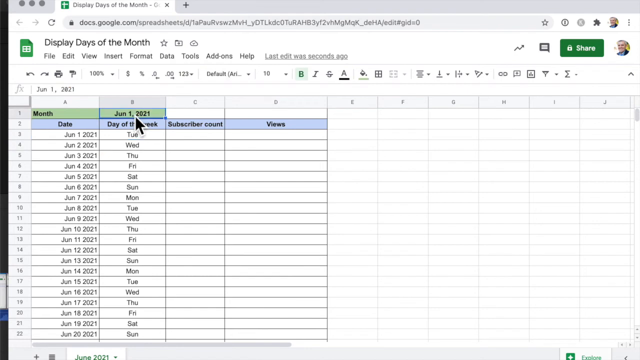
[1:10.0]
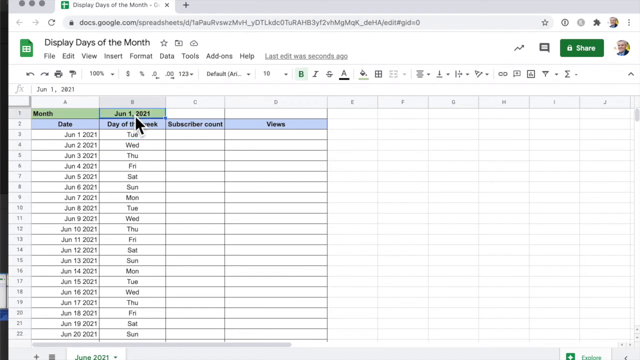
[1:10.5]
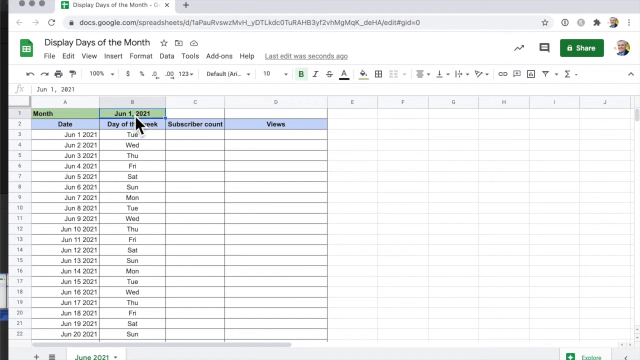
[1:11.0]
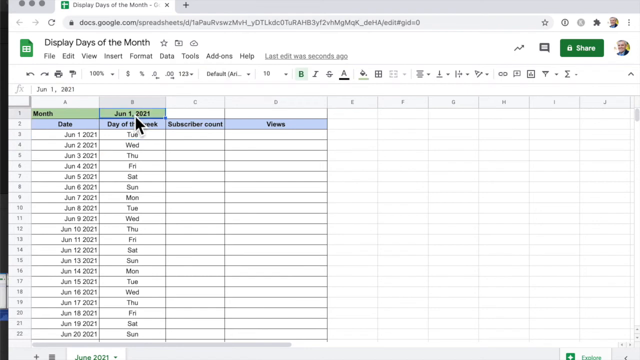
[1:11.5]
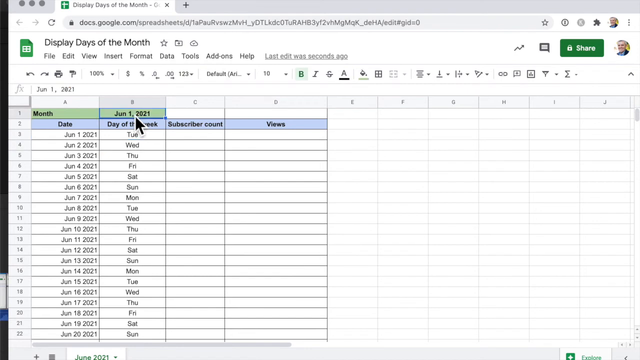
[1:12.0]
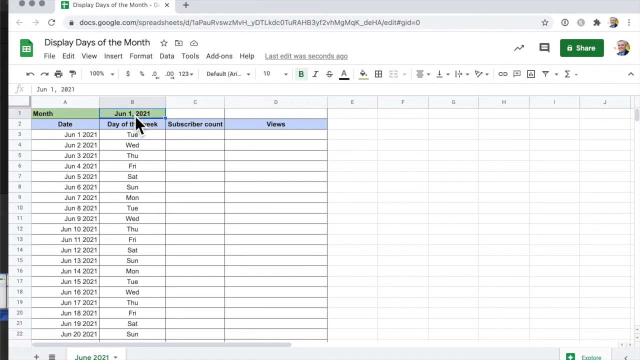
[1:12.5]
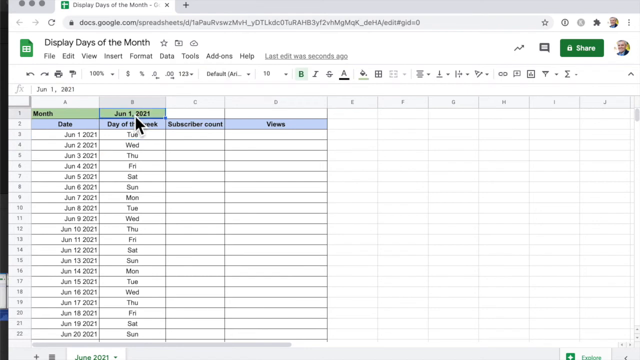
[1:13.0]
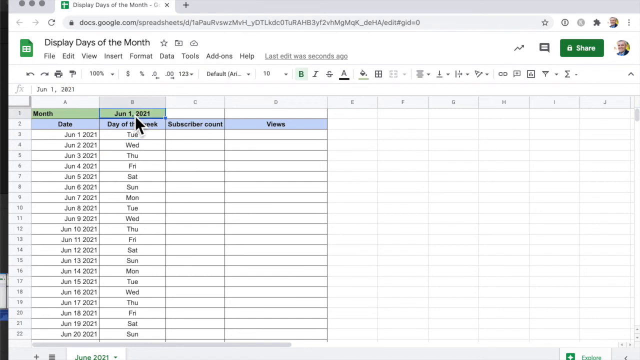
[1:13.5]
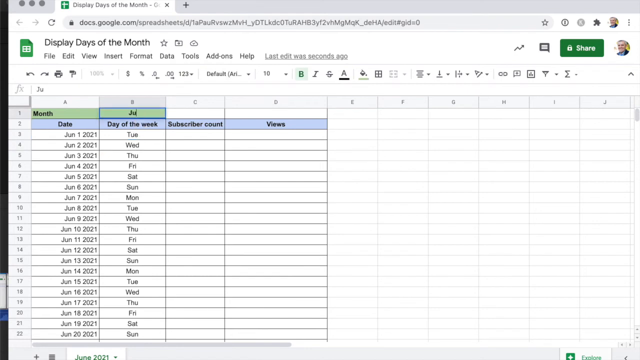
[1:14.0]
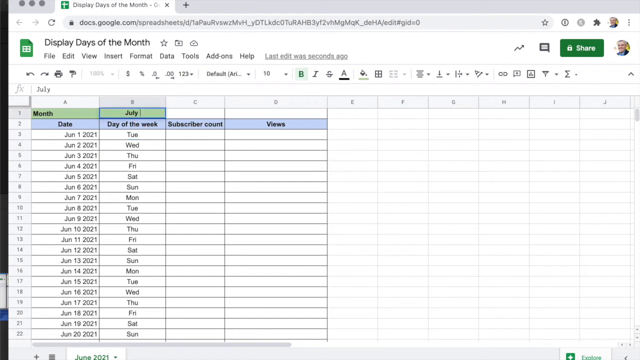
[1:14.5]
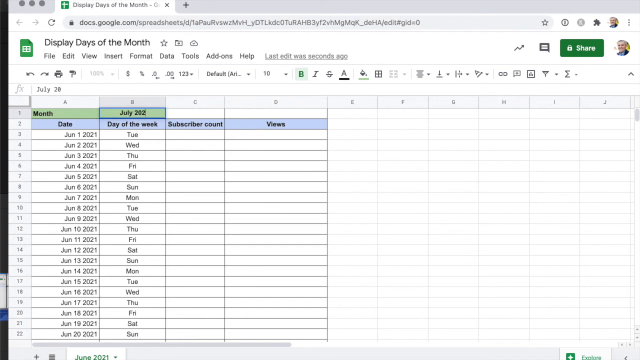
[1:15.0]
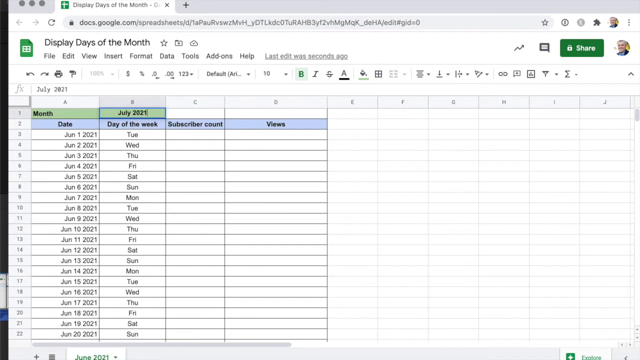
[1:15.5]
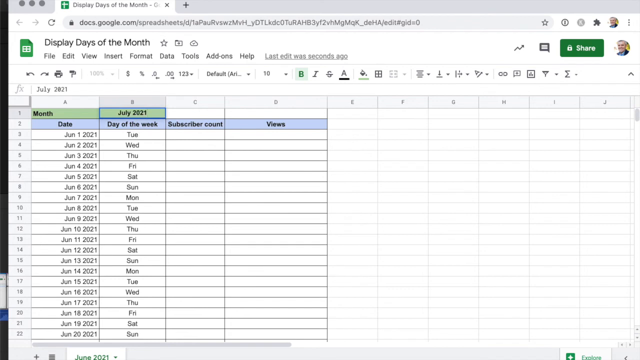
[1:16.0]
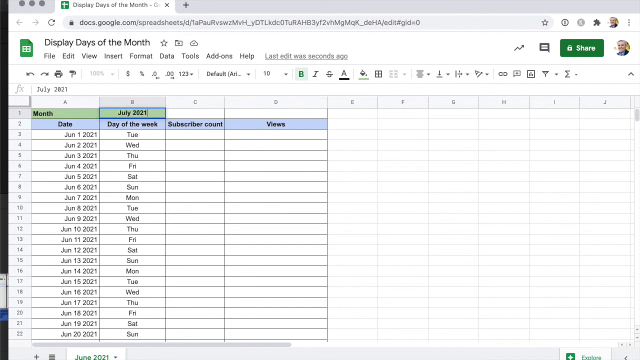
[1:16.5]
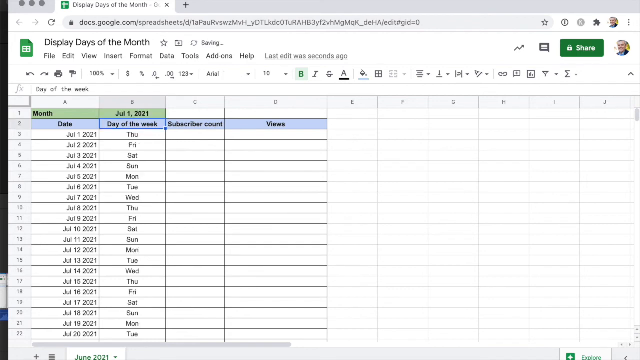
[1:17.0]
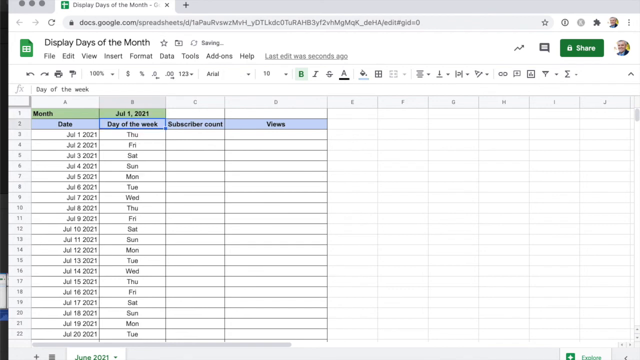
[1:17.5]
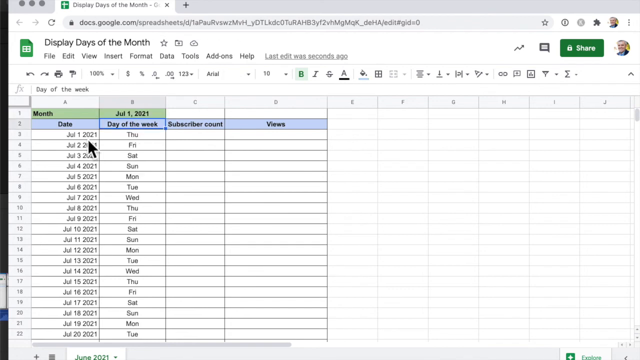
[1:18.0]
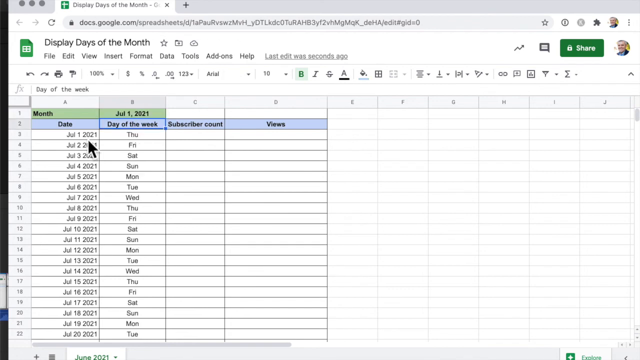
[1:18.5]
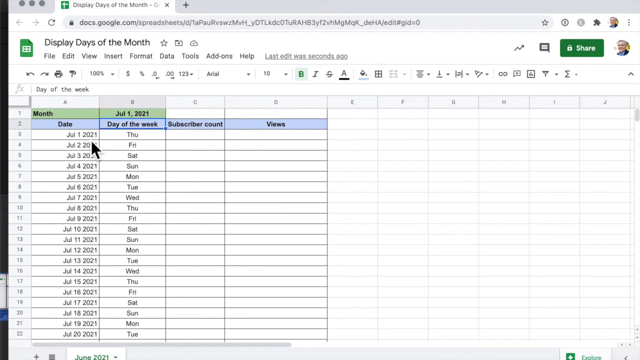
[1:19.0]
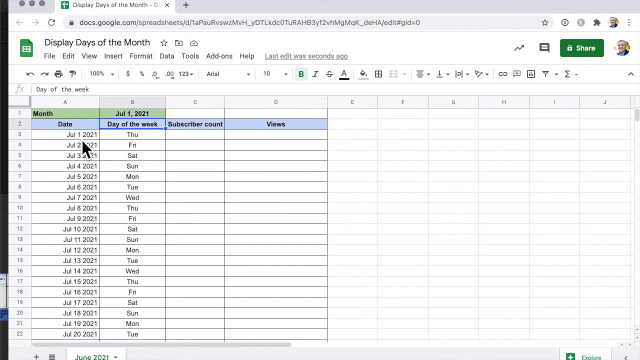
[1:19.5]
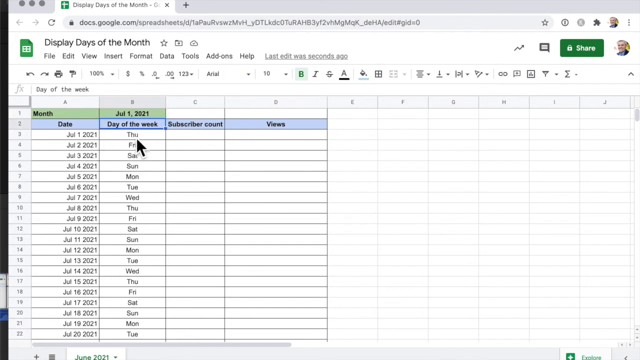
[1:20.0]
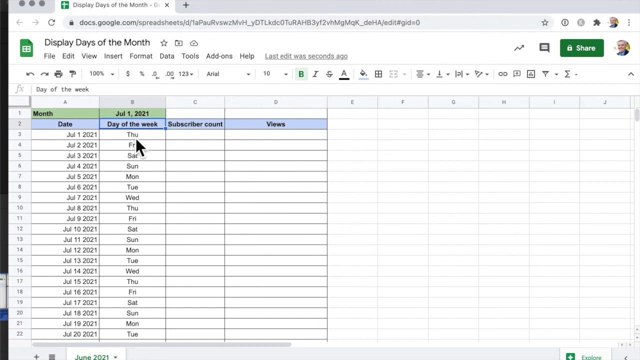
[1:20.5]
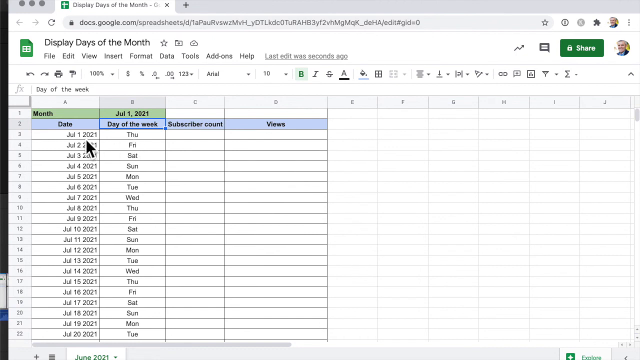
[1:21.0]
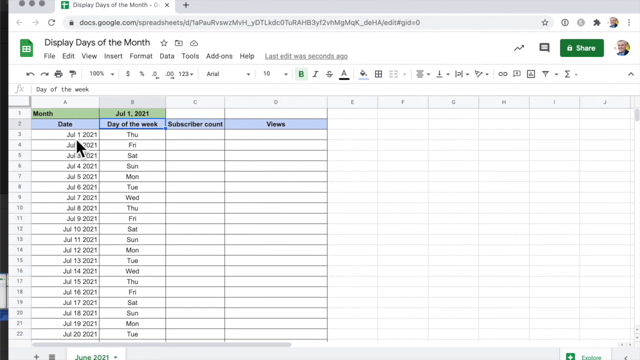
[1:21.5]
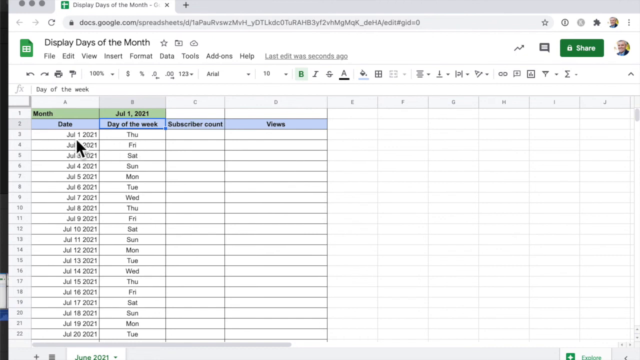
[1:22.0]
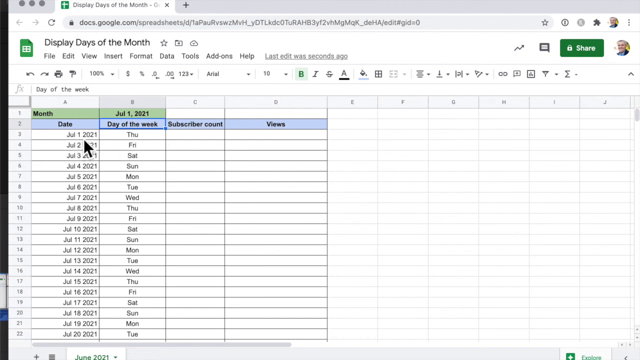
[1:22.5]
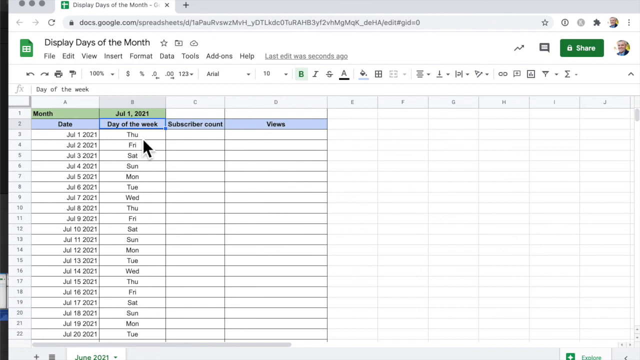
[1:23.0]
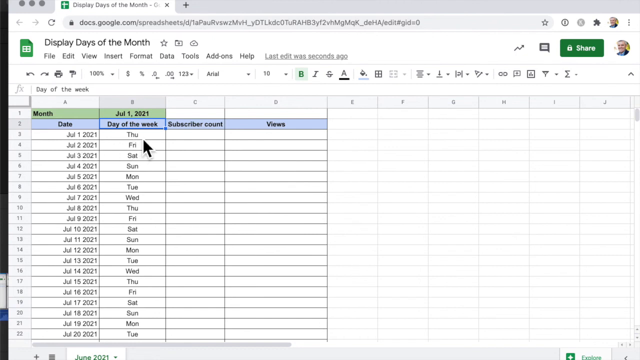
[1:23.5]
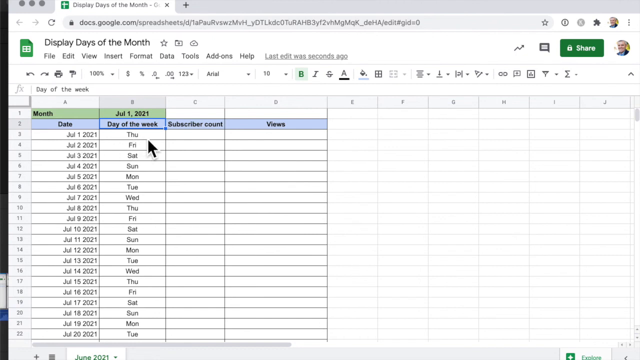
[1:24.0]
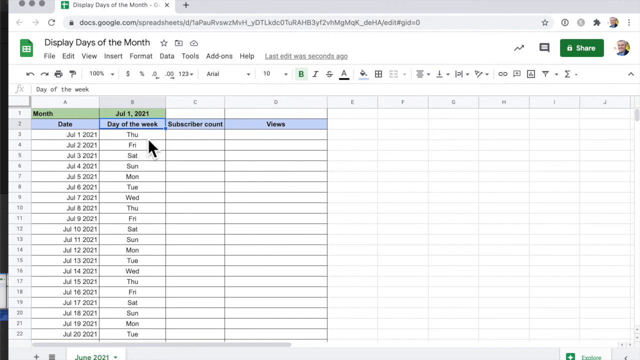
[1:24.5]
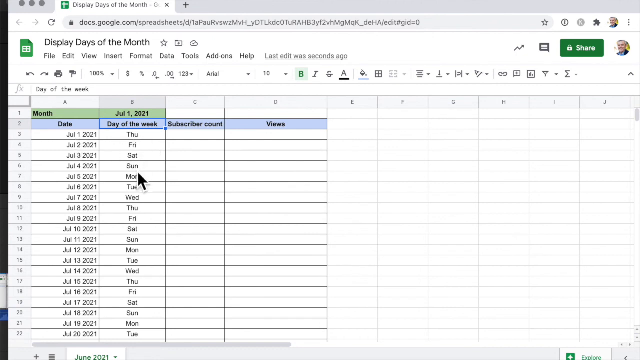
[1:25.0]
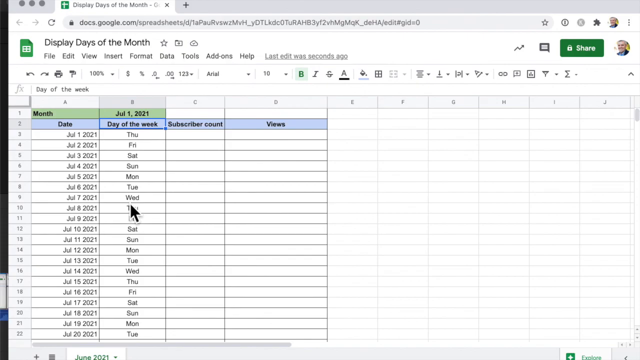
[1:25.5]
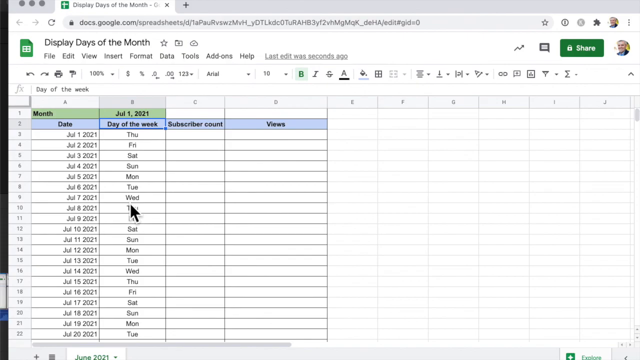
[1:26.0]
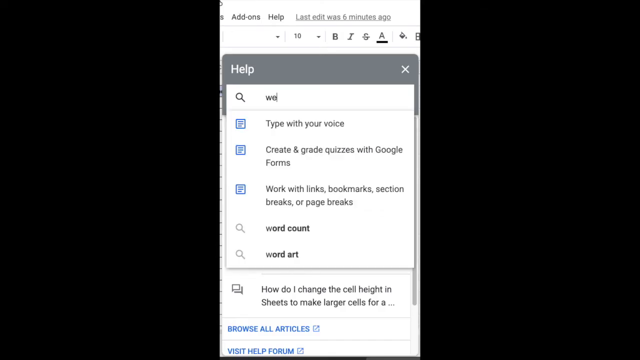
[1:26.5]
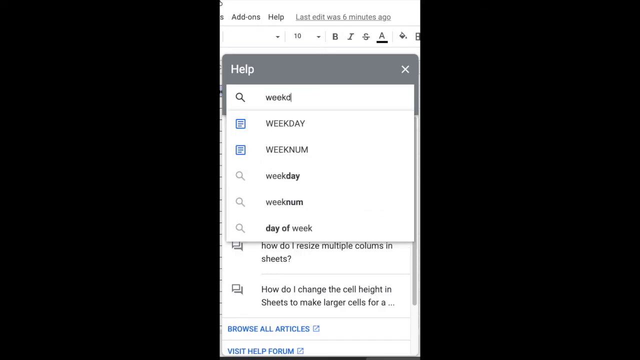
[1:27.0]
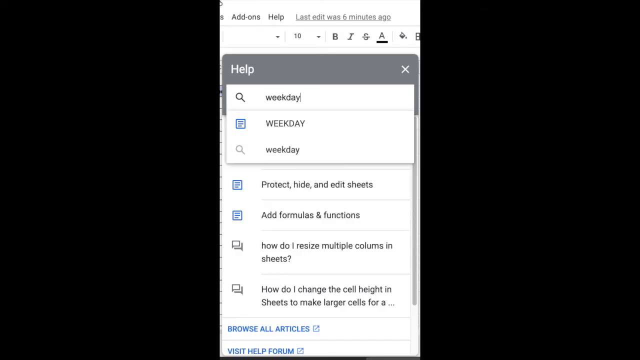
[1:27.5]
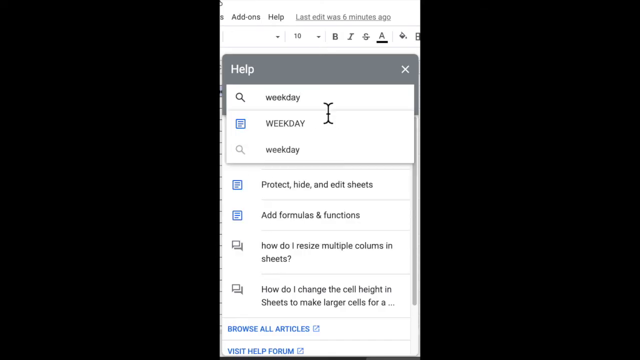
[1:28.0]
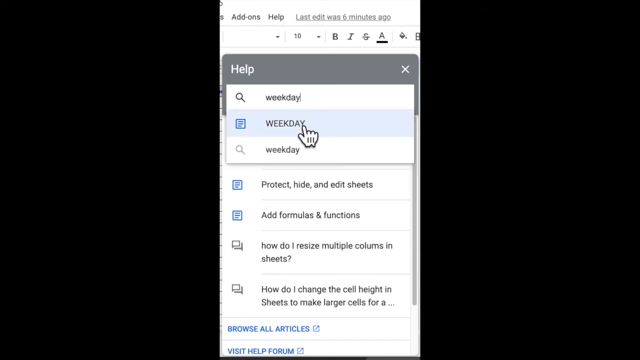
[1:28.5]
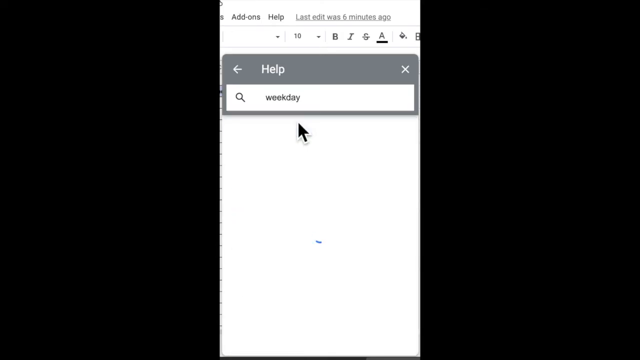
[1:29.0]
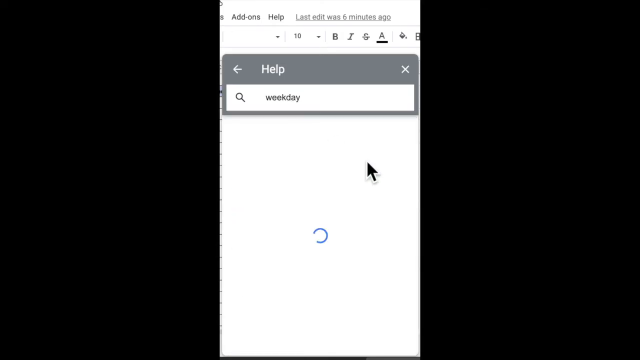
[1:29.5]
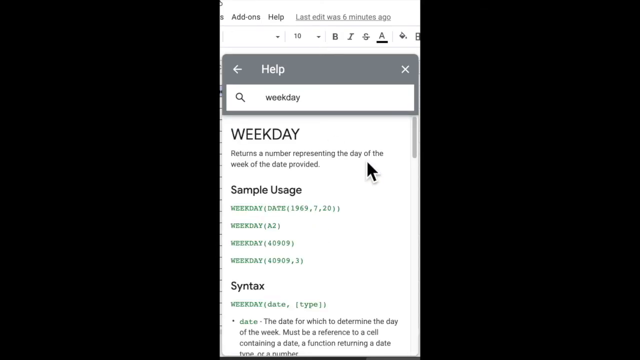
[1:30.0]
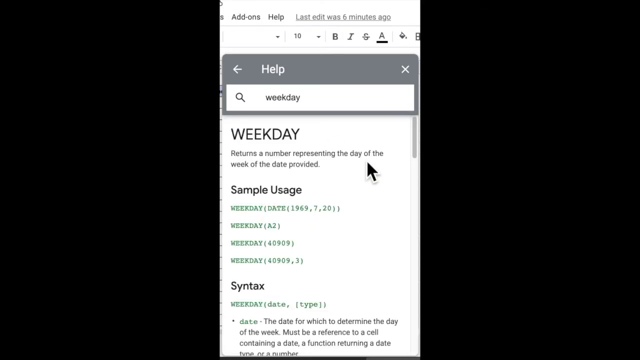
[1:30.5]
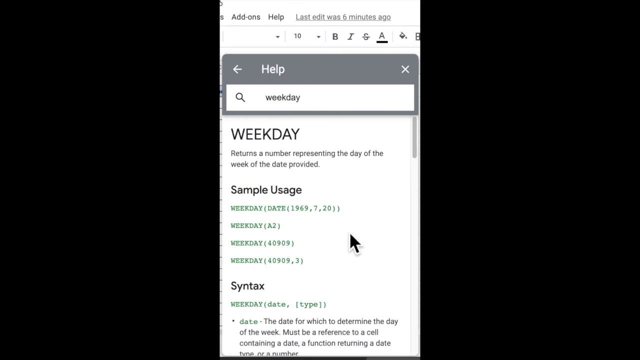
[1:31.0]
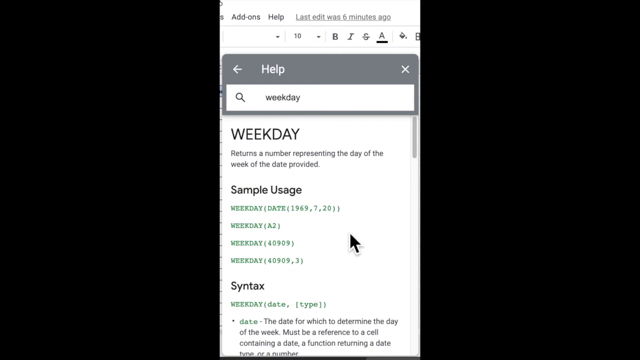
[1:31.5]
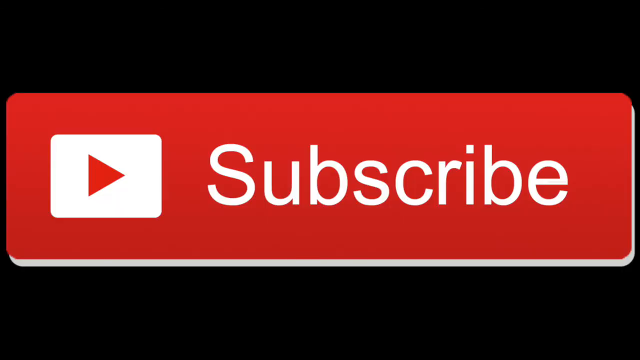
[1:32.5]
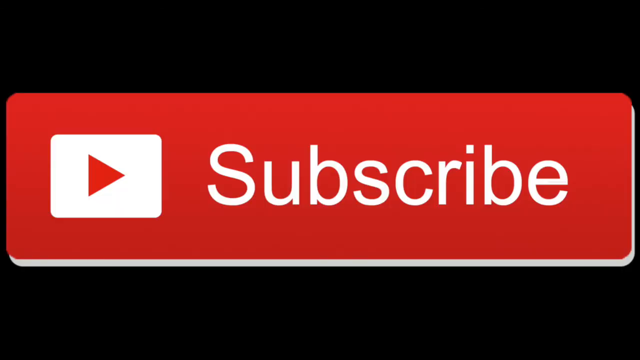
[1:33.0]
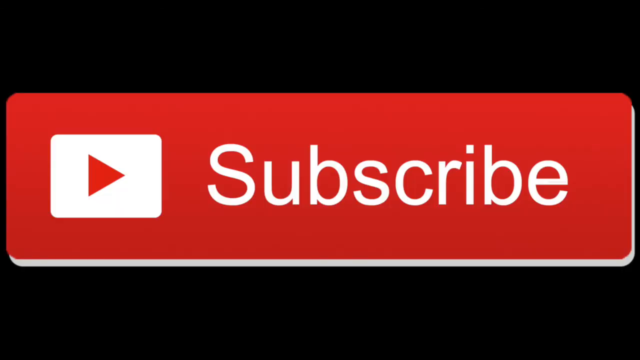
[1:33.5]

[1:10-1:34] The cursor starts in the days of the week section, hovering over the very top row. The green date at the top, which is June 1st, 2021, is changed to July 1st, 2021, and the dates in the date column and the days of the week column update. The person then goes back to the help for the weekday formula, clicking on it to show the sample usage and help. Abruptly the document is no longer shown and the screen goes black, and an outro briefly appears with a watermark in red as the video ends.